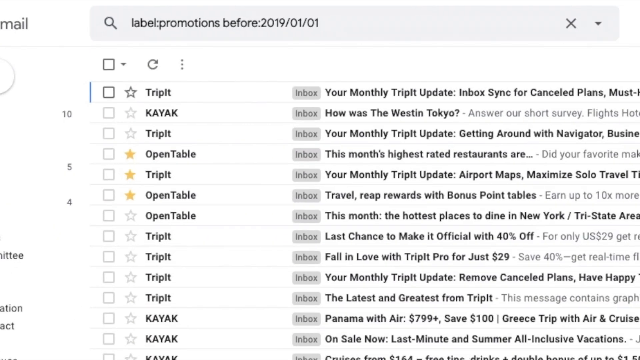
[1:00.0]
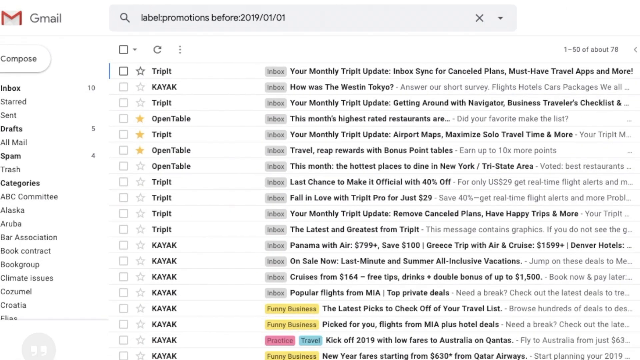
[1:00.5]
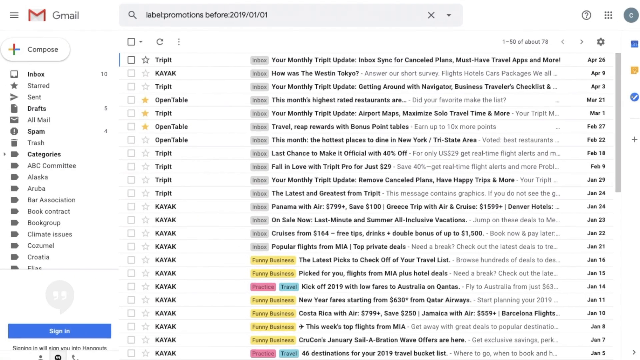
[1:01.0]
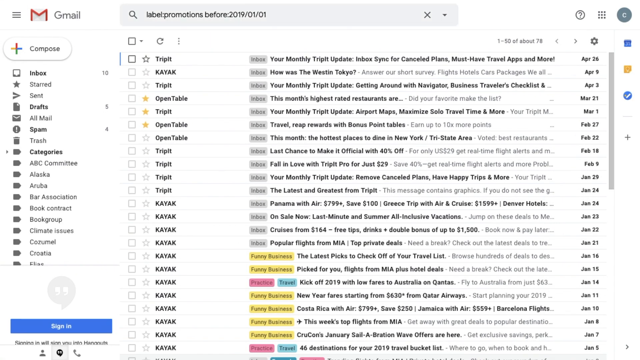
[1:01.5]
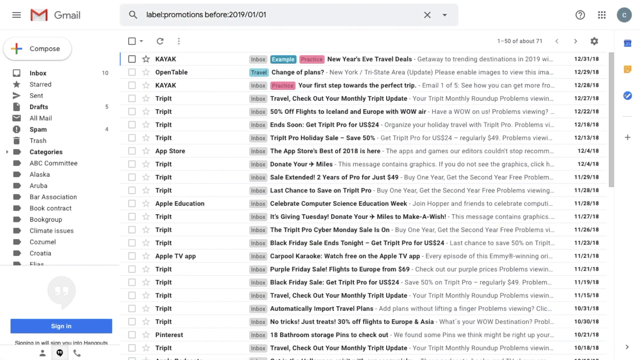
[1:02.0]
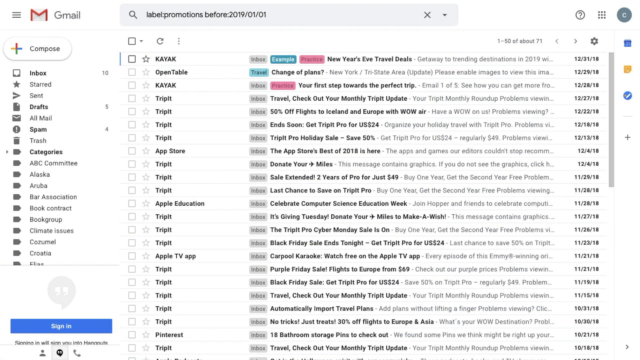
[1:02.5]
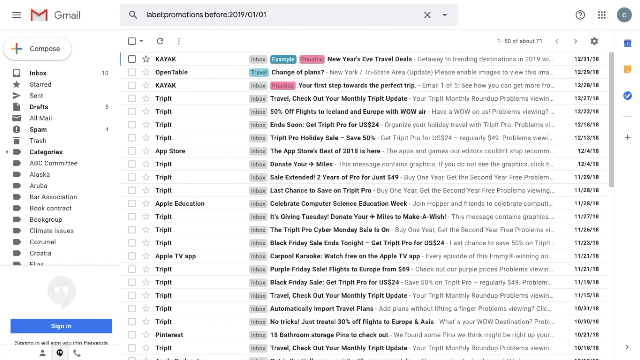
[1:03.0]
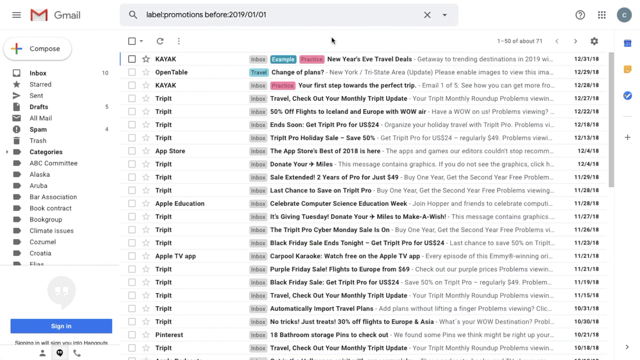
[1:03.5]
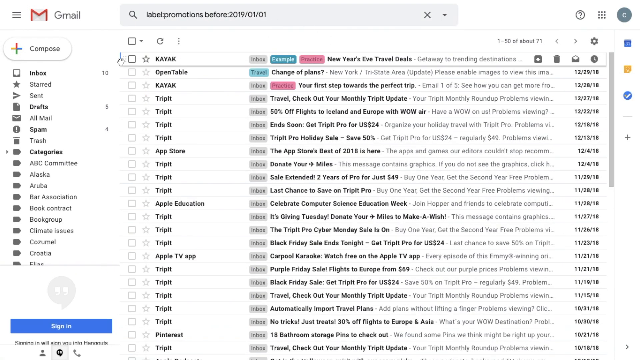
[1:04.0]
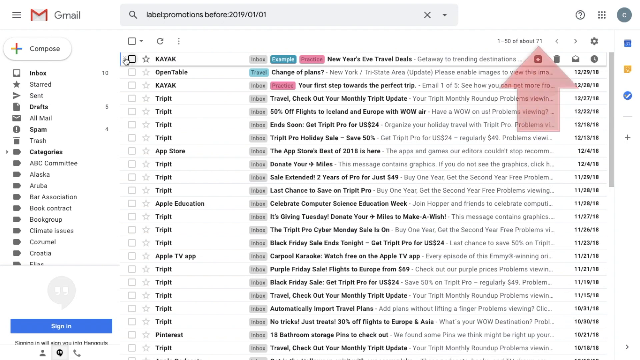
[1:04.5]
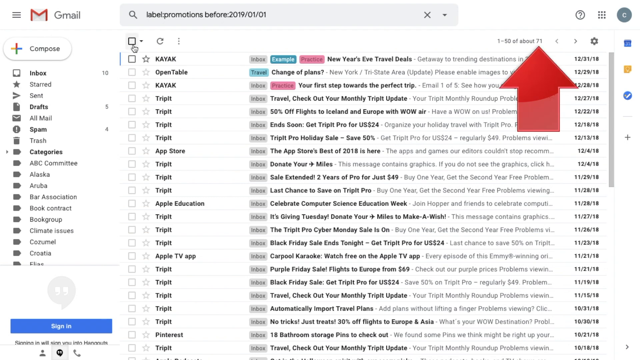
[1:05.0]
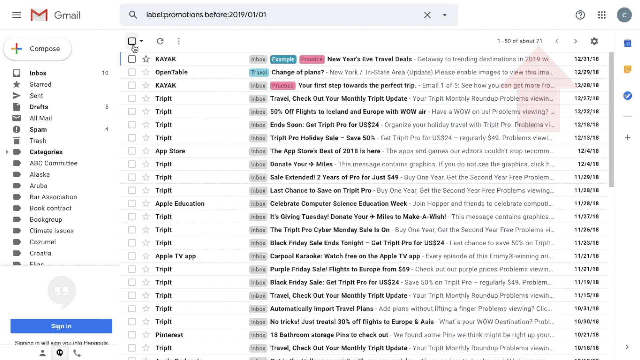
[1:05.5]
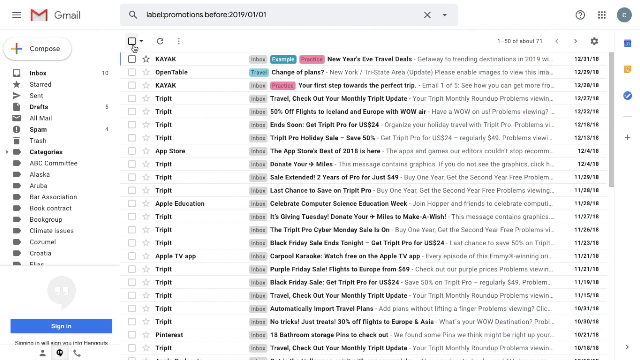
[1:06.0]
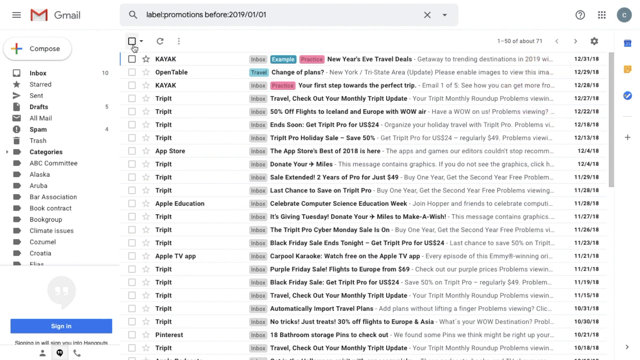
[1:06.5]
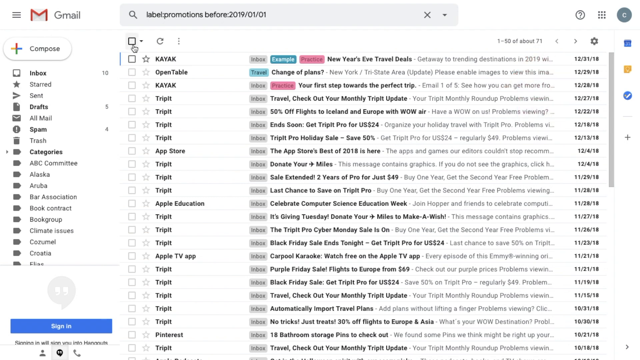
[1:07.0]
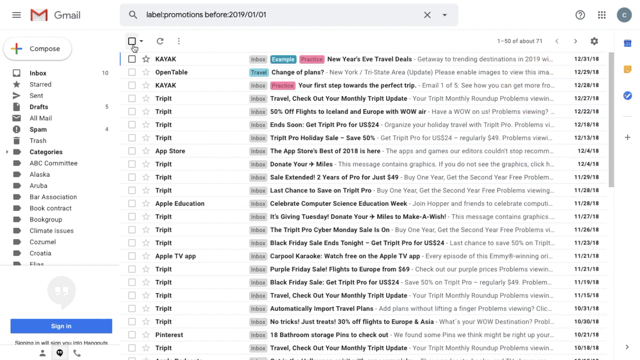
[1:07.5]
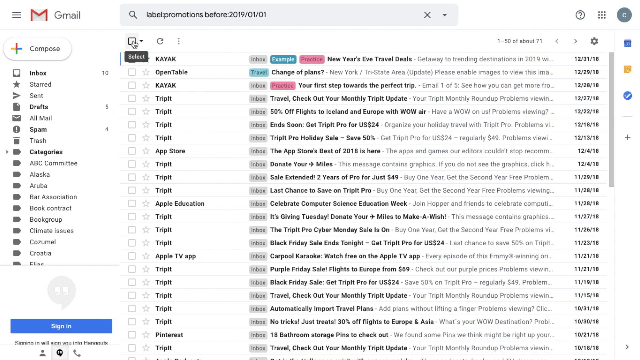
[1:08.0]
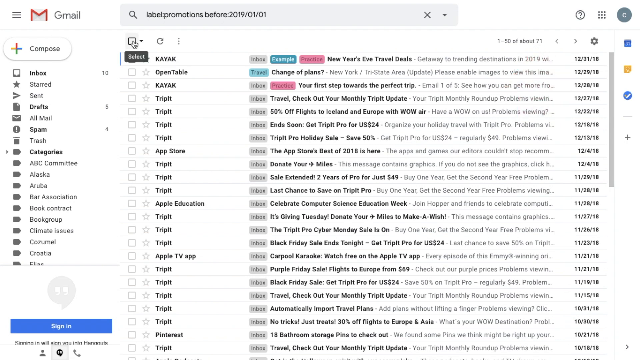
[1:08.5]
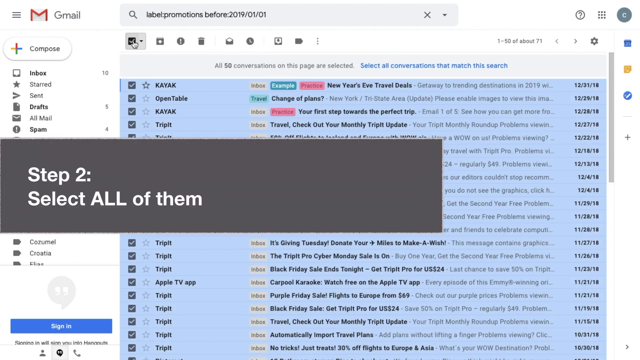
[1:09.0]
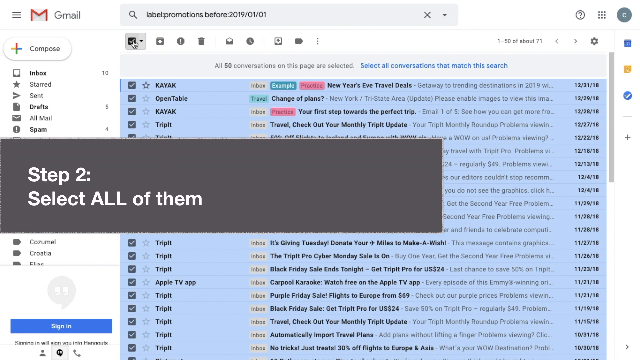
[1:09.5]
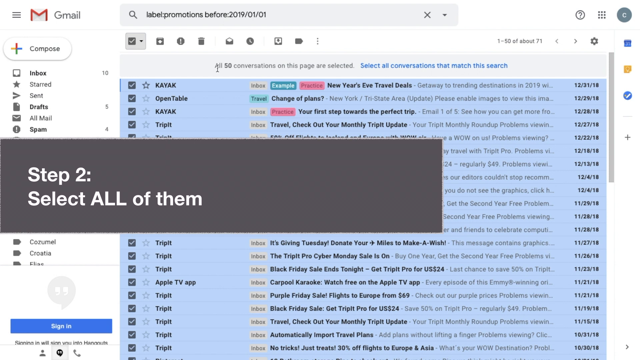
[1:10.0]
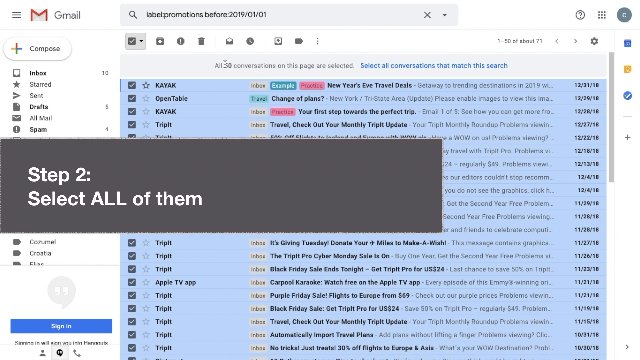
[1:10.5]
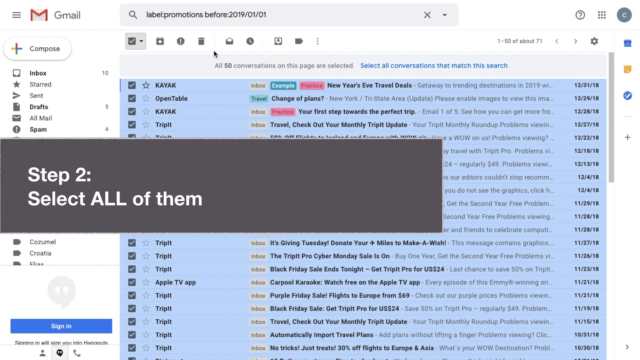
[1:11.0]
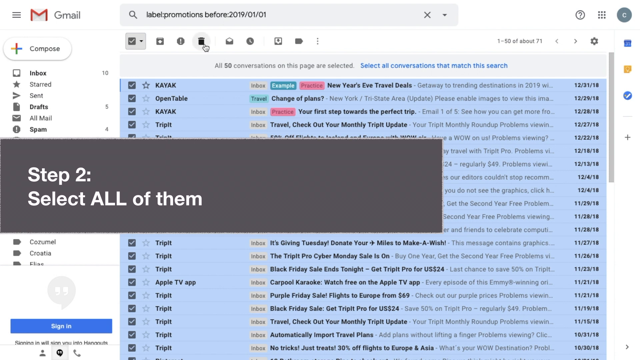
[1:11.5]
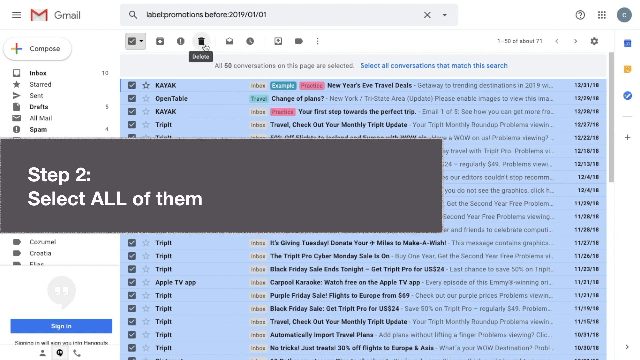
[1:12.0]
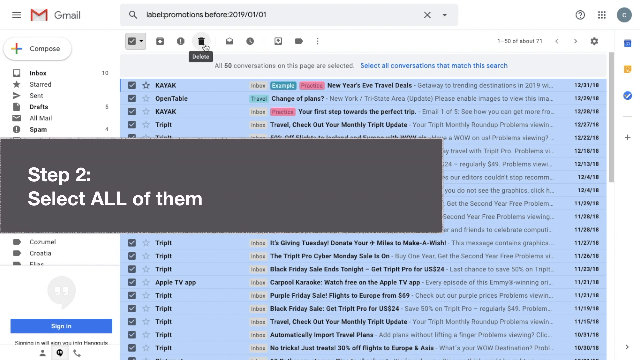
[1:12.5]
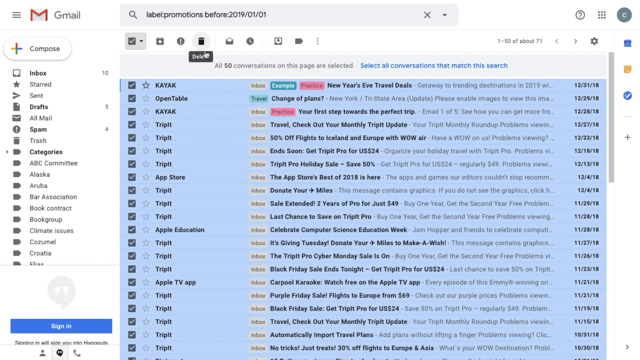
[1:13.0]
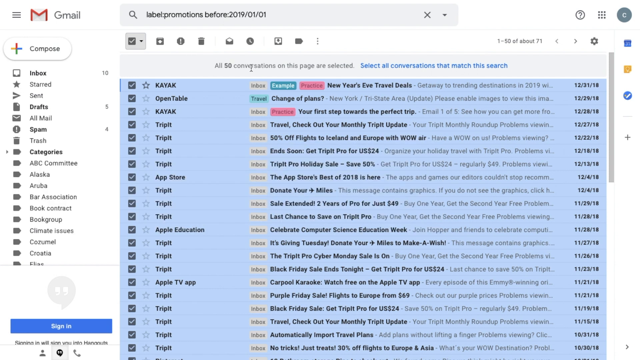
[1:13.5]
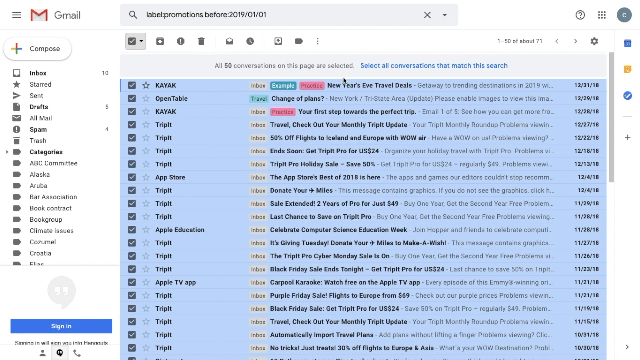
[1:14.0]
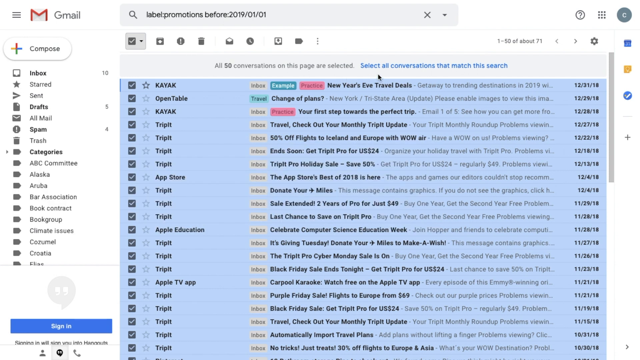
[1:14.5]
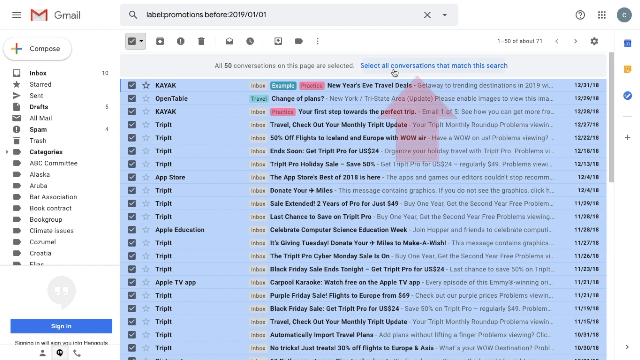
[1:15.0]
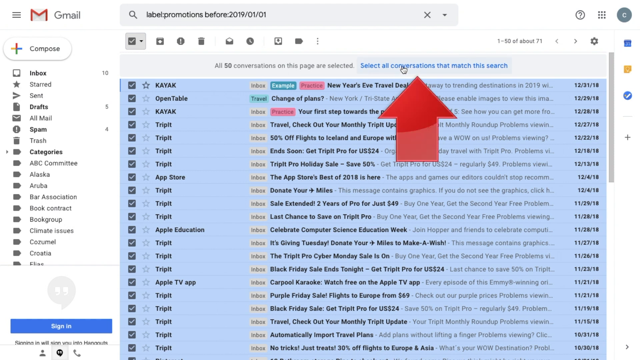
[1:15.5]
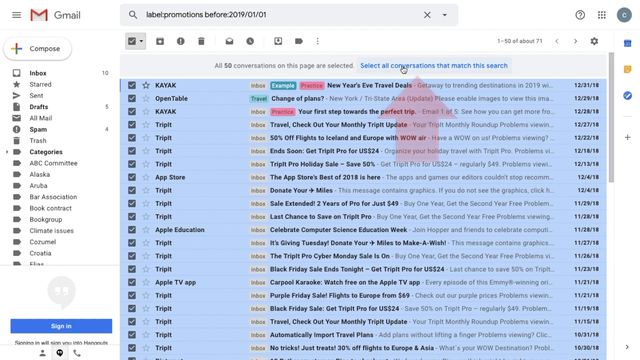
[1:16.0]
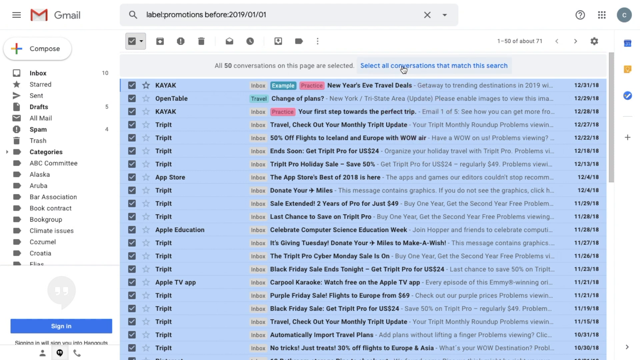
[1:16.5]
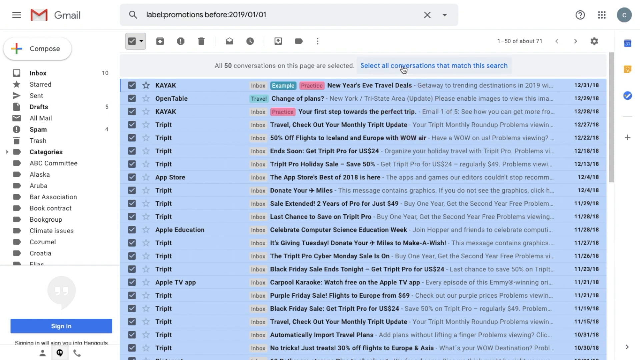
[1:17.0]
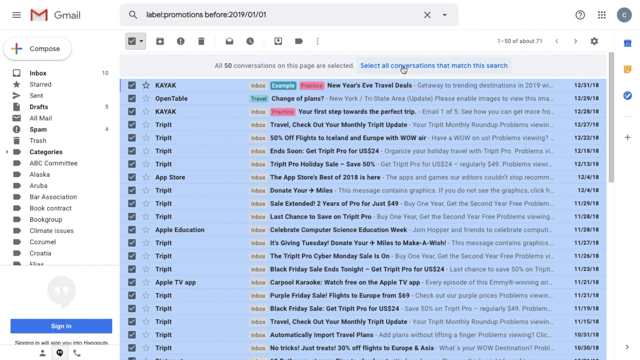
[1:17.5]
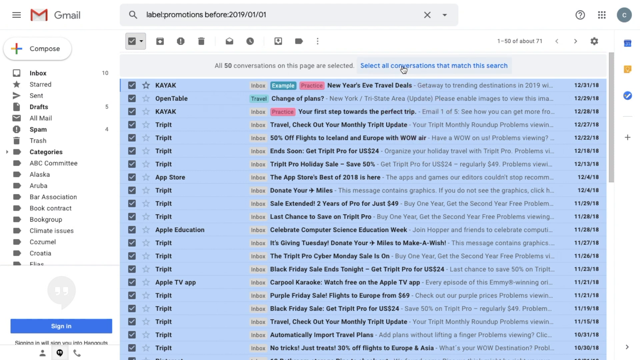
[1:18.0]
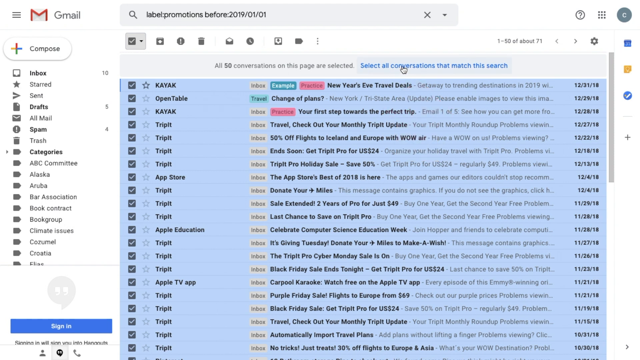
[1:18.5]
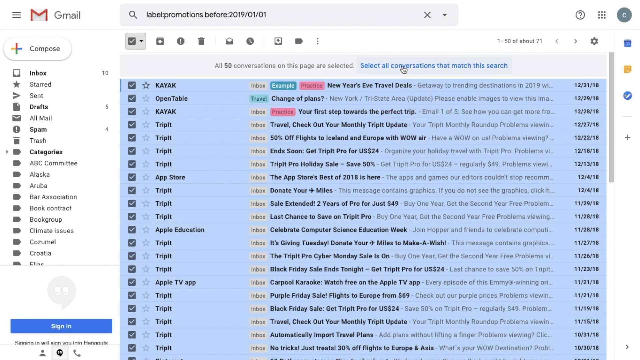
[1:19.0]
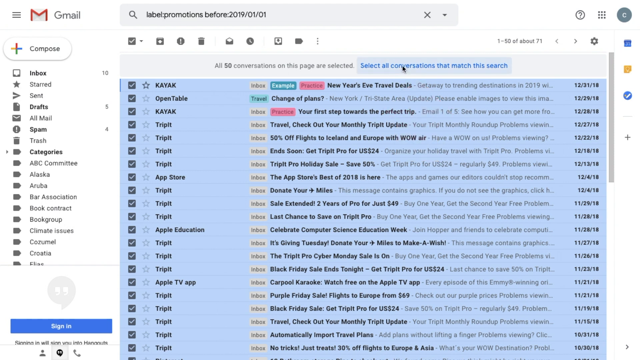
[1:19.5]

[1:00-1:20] The unwanted emails are listed, with a checkbox at the top and a checkbox at the left-hand side of each mail. Step two is to select all of them by checking the top box right underneath the search bar. Once it is checked, a delete icon resembling a trash can appears, along with text in blue reading "select all conversations that match this search" and the message "All 50 conversations on this page are selected."